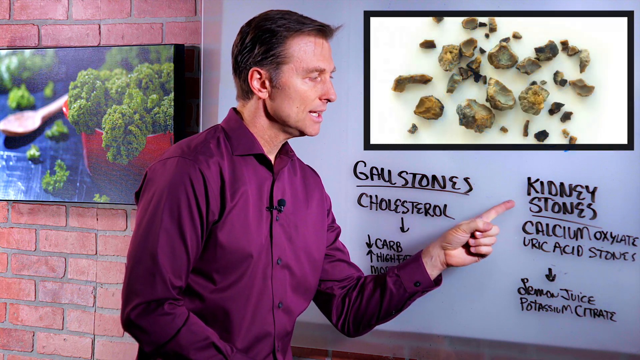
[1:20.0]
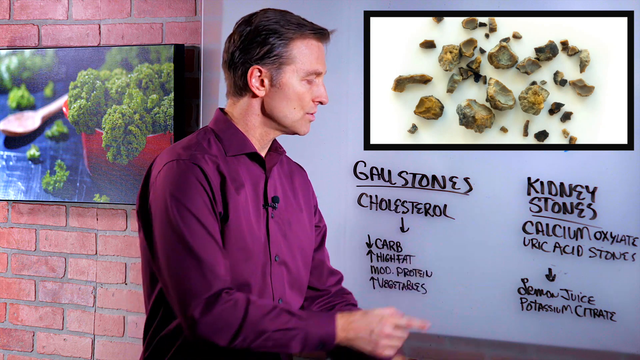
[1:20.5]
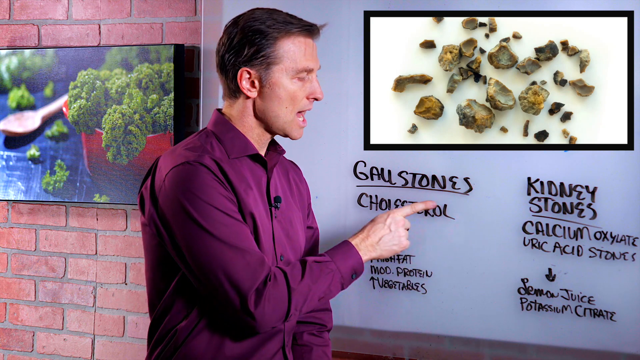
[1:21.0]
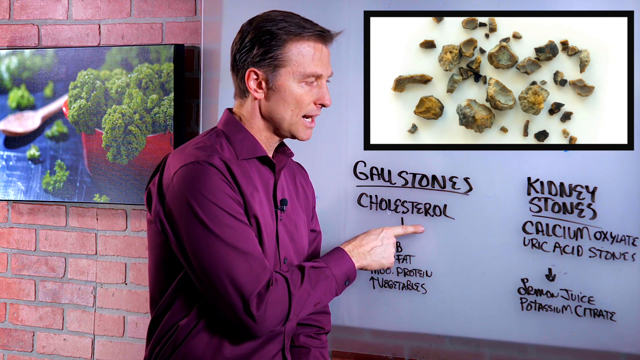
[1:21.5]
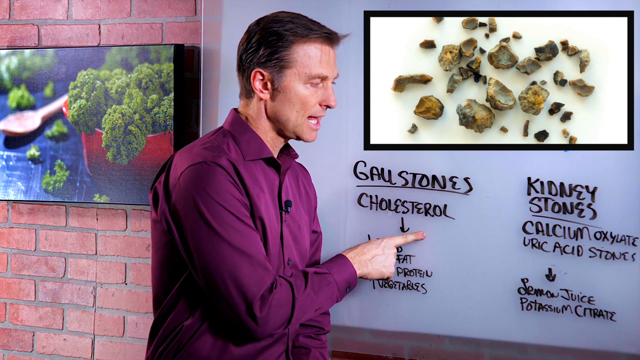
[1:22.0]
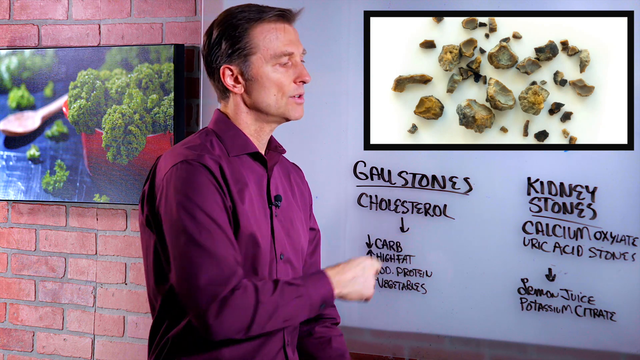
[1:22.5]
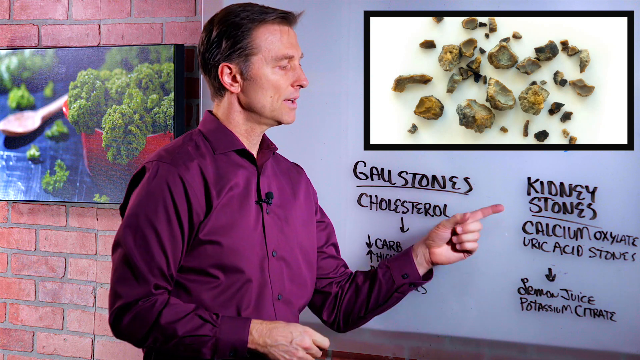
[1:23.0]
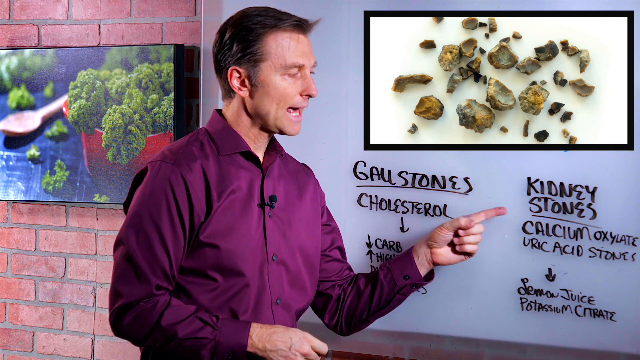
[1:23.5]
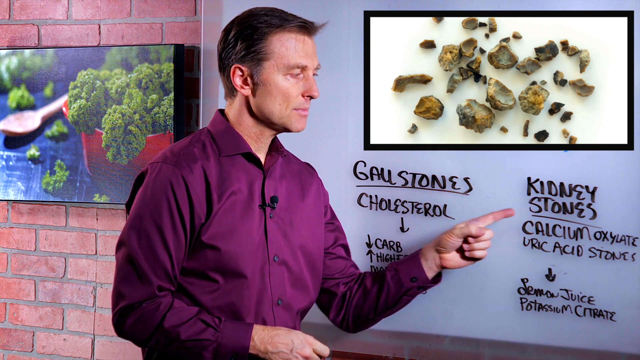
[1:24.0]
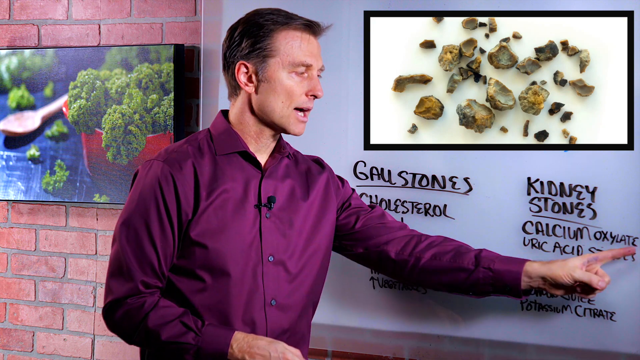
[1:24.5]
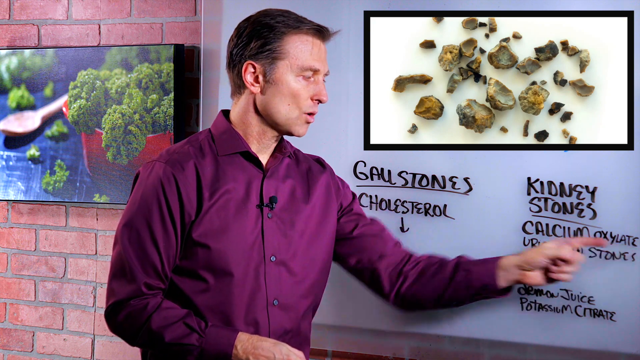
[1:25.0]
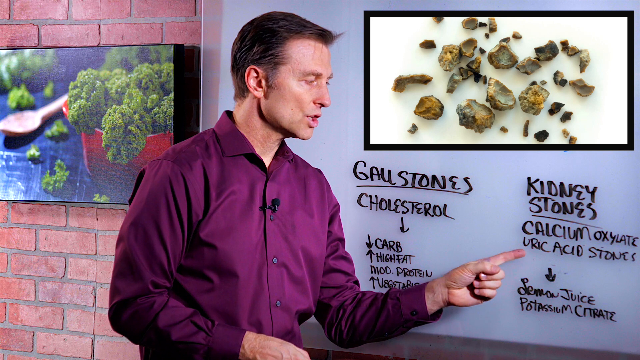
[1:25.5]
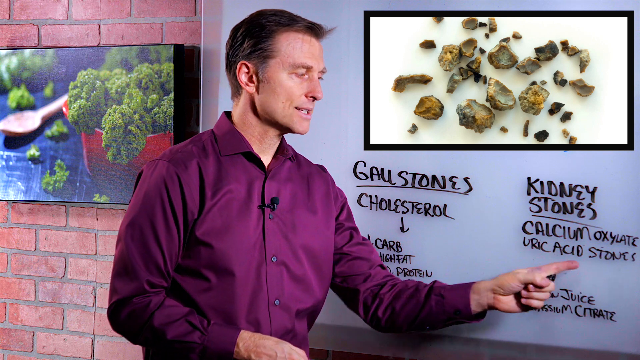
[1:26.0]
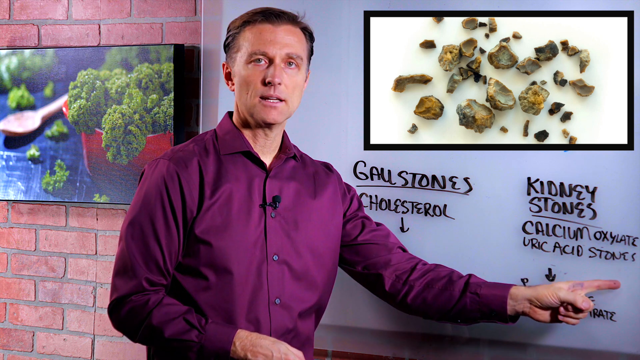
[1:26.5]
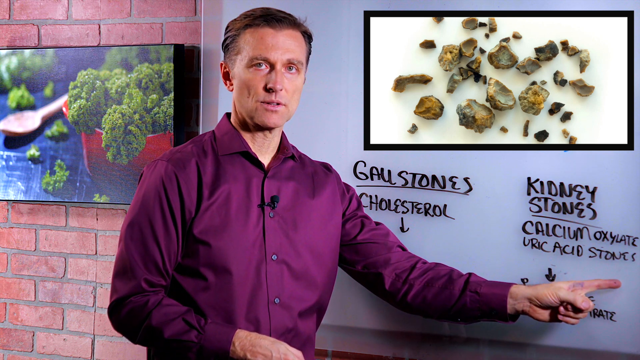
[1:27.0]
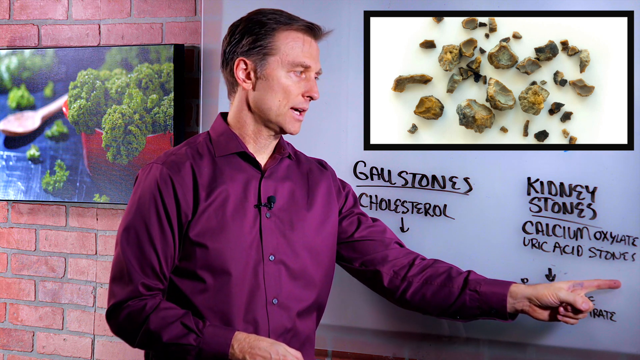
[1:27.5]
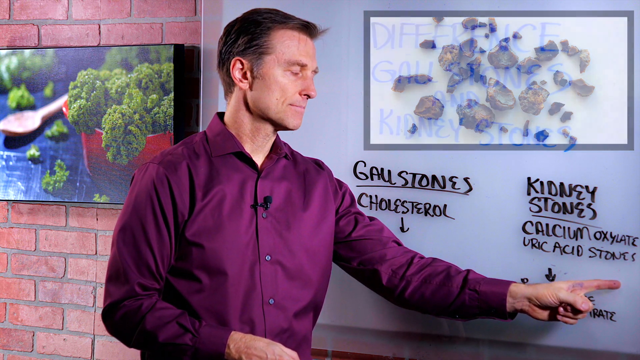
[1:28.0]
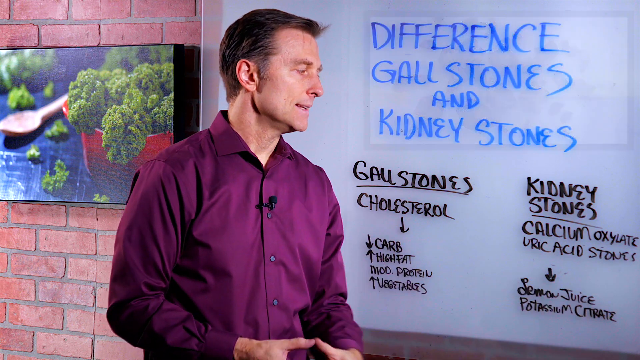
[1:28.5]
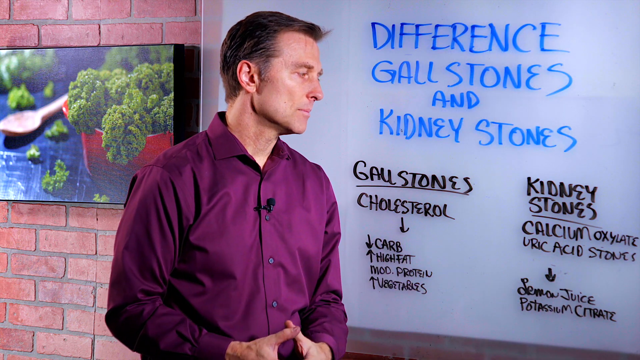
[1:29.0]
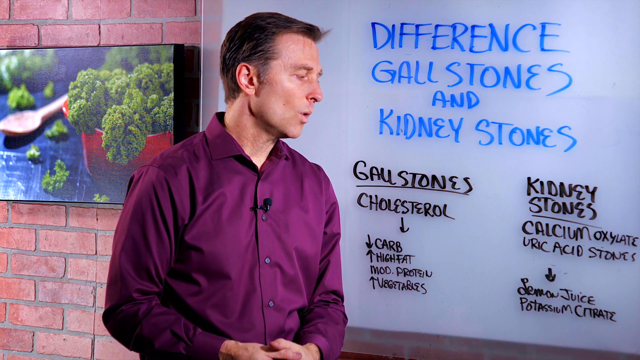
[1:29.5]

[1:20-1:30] The man in the purple button-down collared shirt speaks in front of the whiteboard, facing it and pointing at the word "kidney stone". In the upper right corner is a rectangle outlined in black containing a white surface with what look to be stones of different sizes and shapes. He gestures with his right hand again just below "cholesterol", then with his left hand points at "kidney stones", then at "calcium oxalate", and then at "uric acid stones". He keeps speaking and occasionally looks toward the camera.